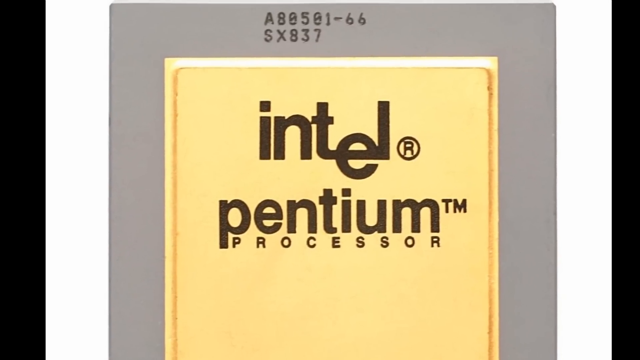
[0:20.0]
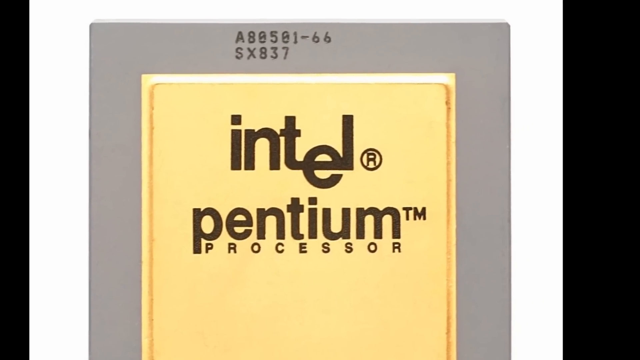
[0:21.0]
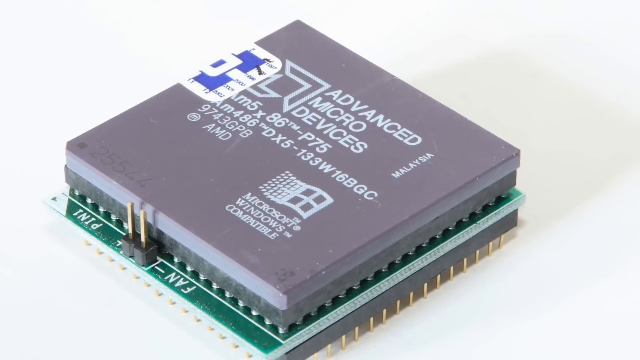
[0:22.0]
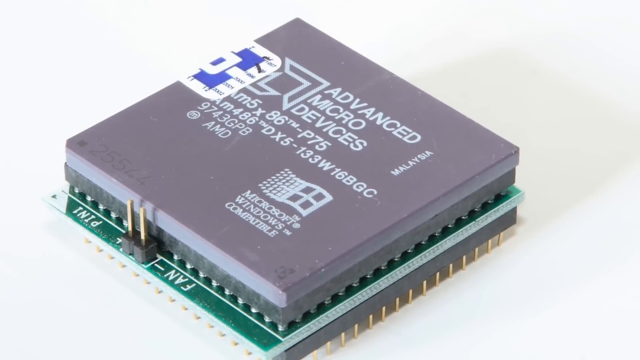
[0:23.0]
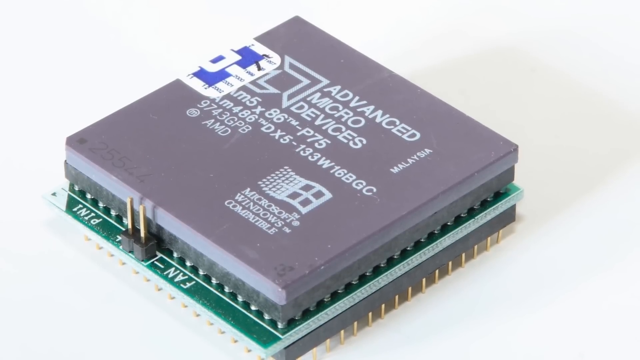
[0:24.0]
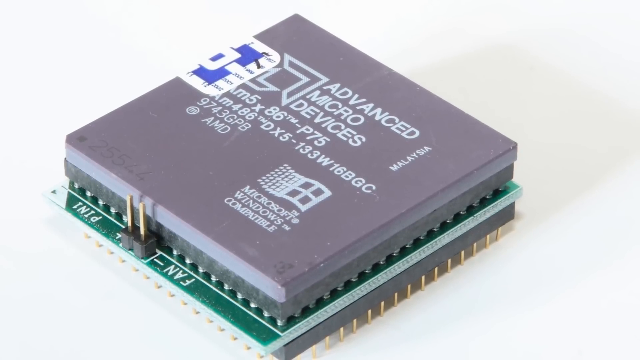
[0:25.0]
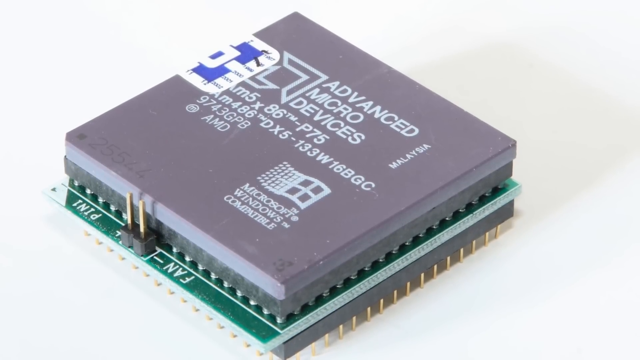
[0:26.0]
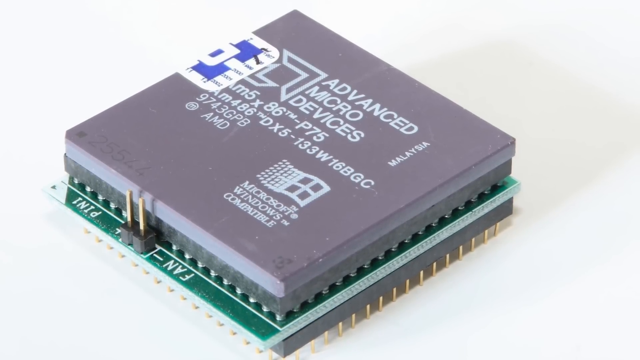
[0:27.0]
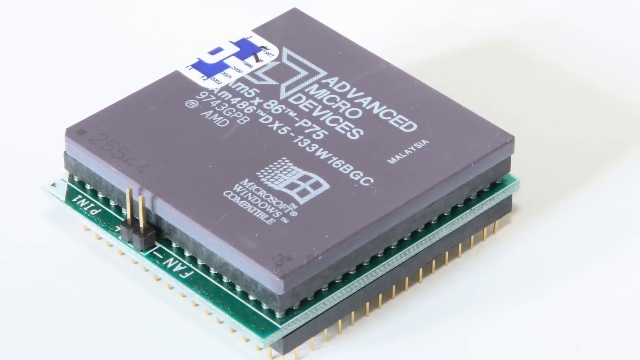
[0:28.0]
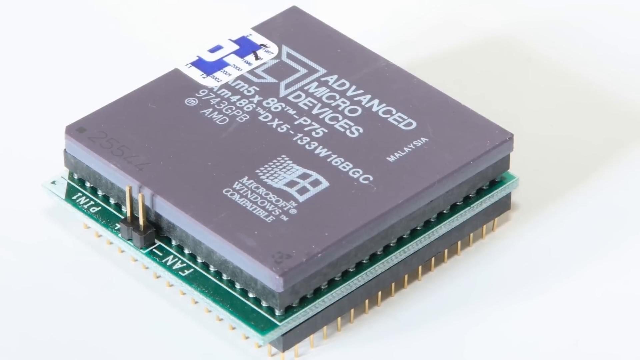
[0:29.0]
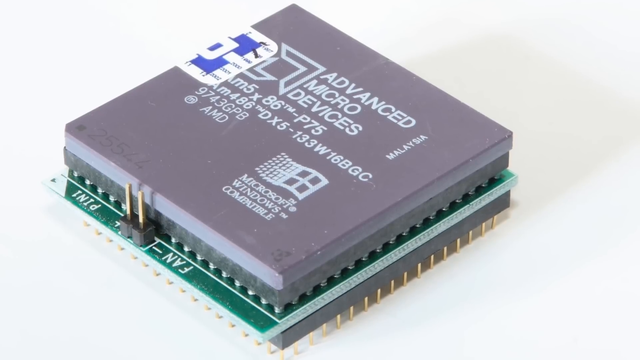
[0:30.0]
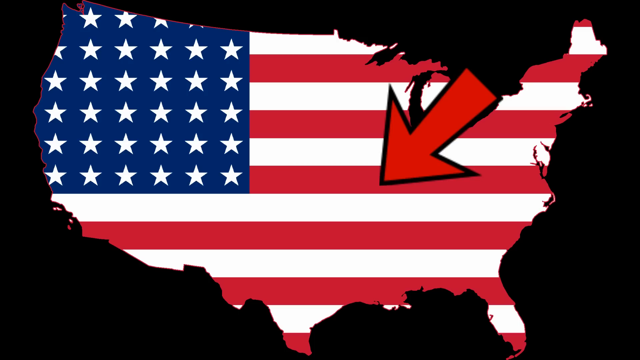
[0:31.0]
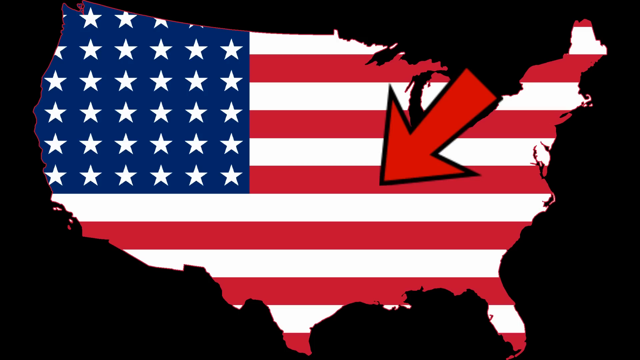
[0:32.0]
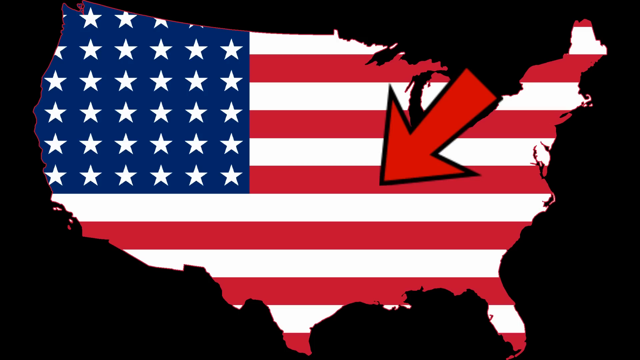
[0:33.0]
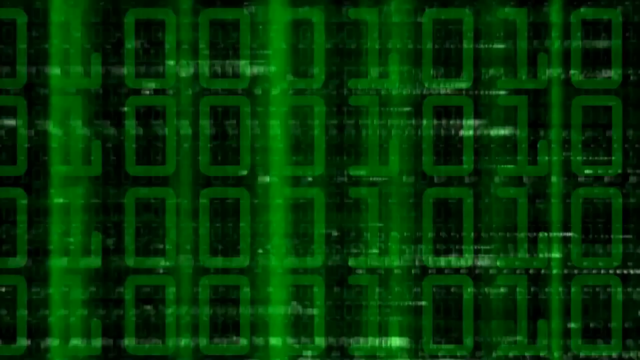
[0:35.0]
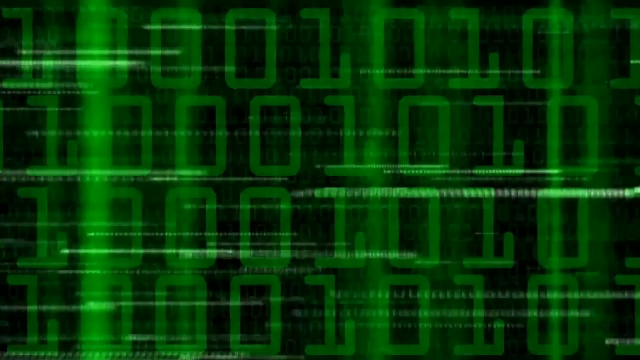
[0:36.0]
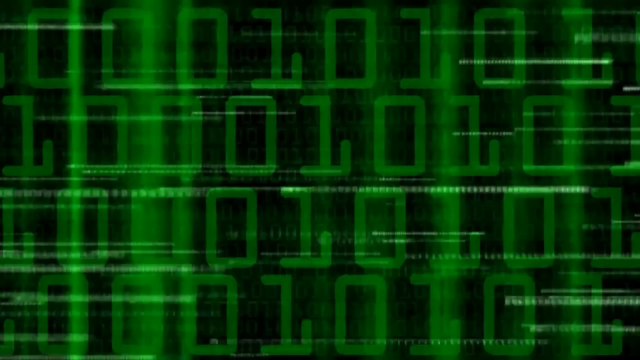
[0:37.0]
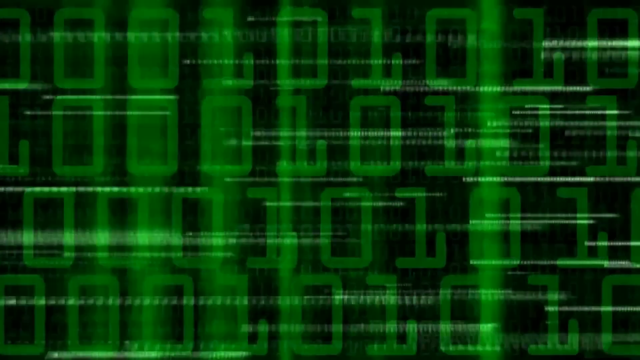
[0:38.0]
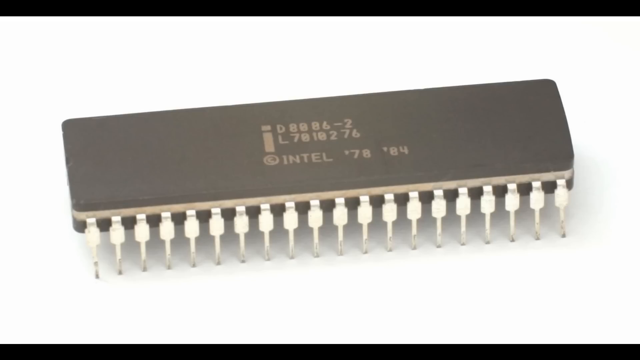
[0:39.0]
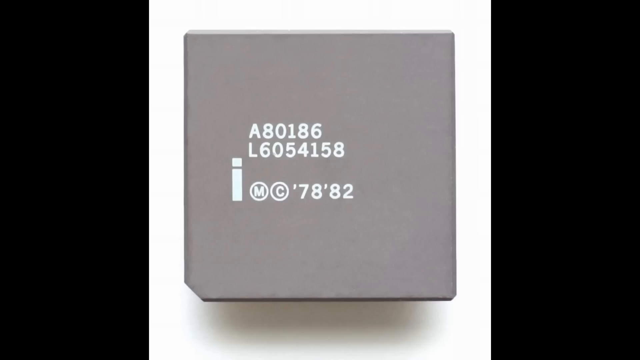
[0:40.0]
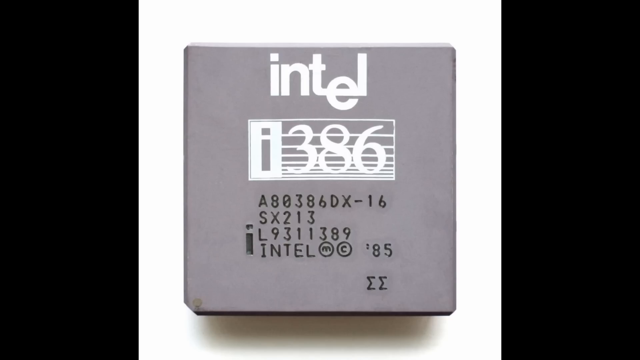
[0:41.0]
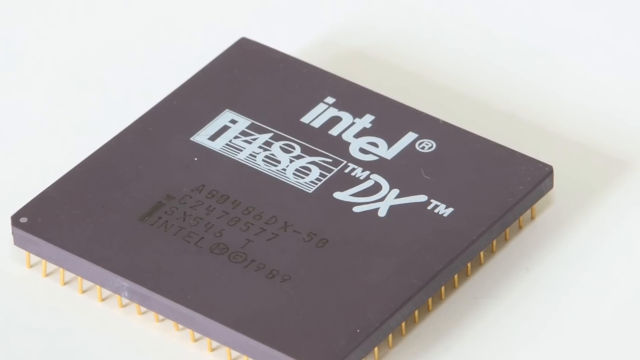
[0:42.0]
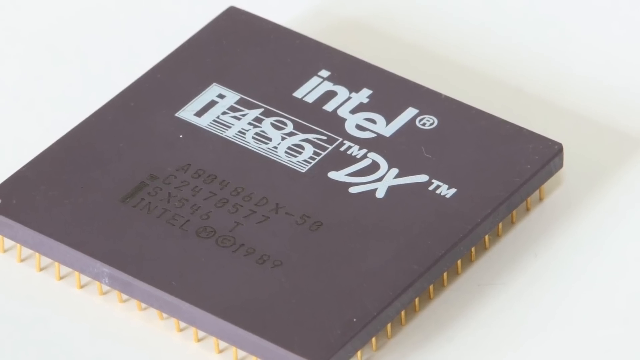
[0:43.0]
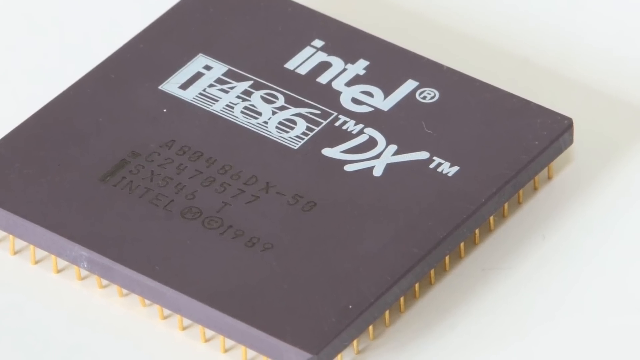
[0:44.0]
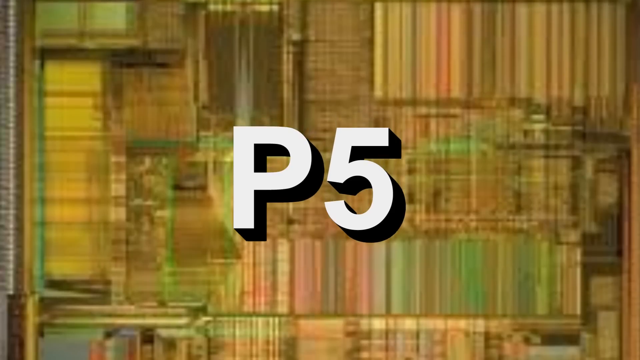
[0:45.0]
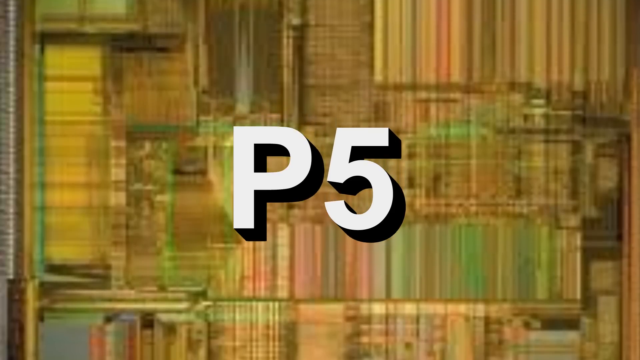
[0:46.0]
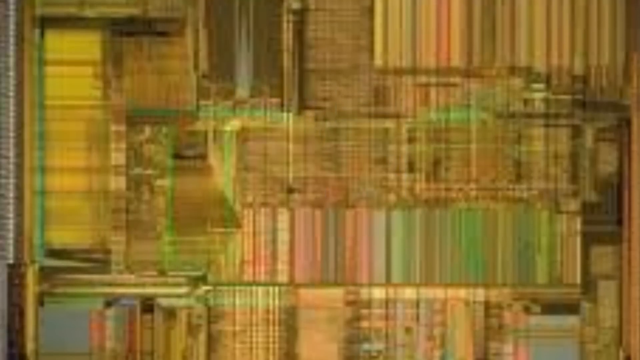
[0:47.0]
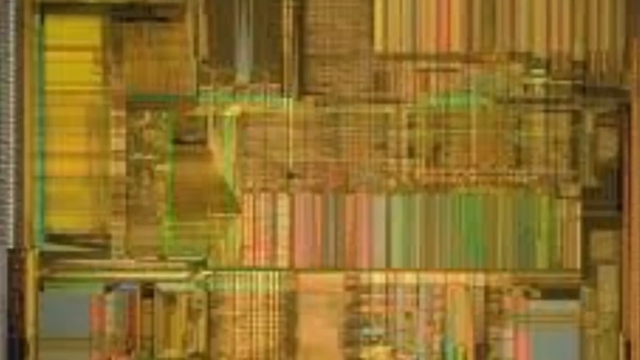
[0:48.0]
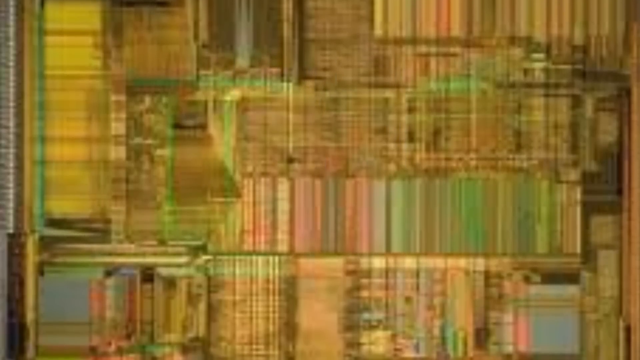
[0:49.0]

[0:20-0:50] On a black background there is almost like a white picture frame with a purple back cover in it, and inside that a beige square that says "Intel Pentium." Next to Intel is a circled R, and next to Pentium processor is a TM. A series of numbers runs along the top, apparently "8B0501-66," and along the bottom "SX837." The view then moves to some type of computer chip, like something seen in a computer or video game, with "Advanced Micro Devices" and "Microsoft Windows" on it. It looks almost like three layers: a silver plate on the bottom, a green piece, and a metal plate on top. Next comes a black background with a flag of North America, but covered in the United States, and then the video skips through a bunch of different types of computer chips.